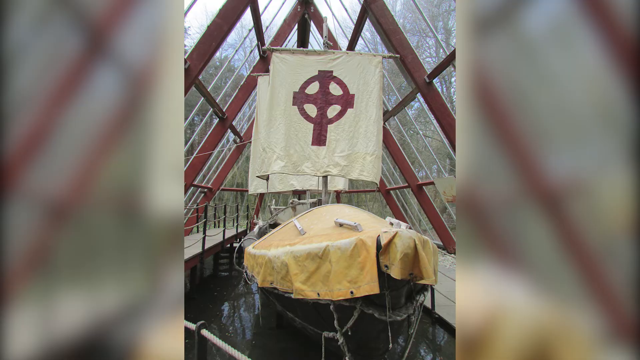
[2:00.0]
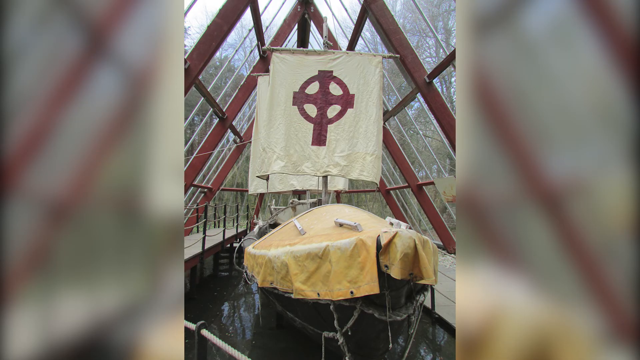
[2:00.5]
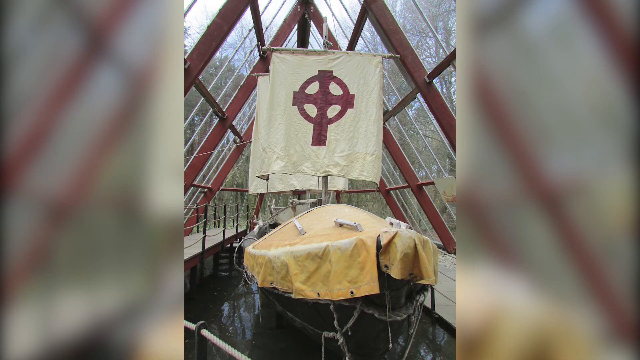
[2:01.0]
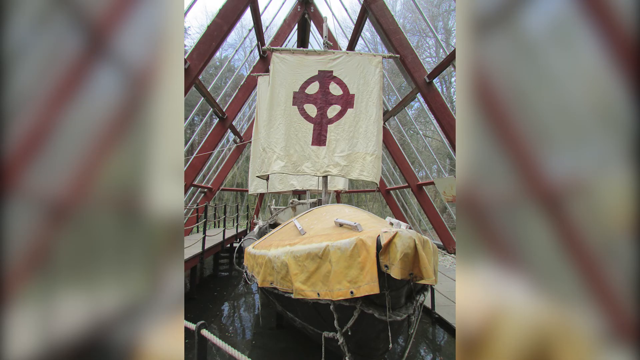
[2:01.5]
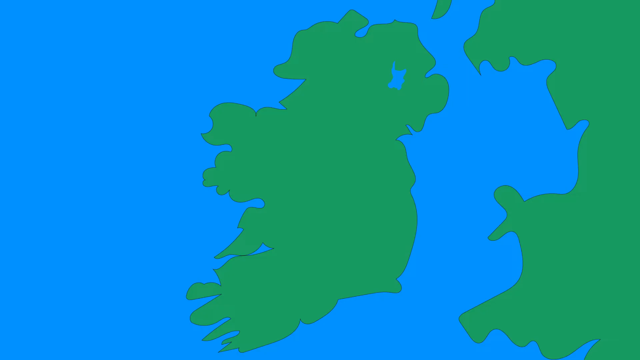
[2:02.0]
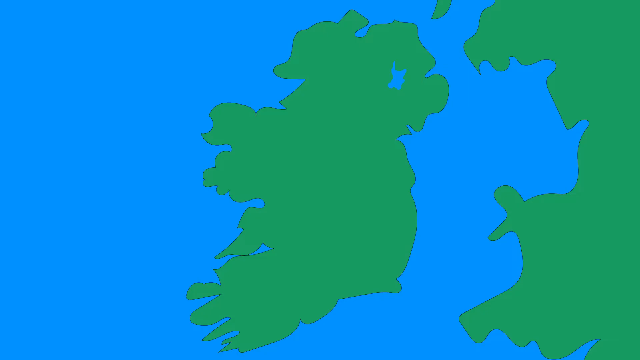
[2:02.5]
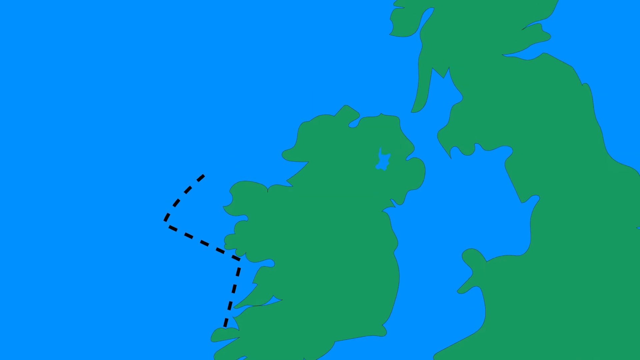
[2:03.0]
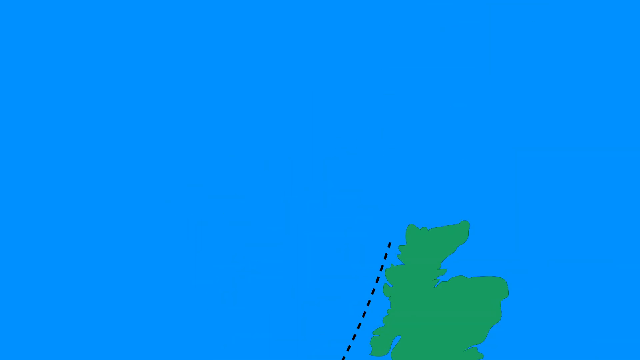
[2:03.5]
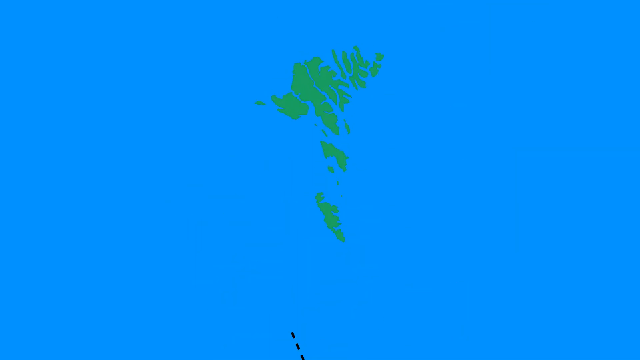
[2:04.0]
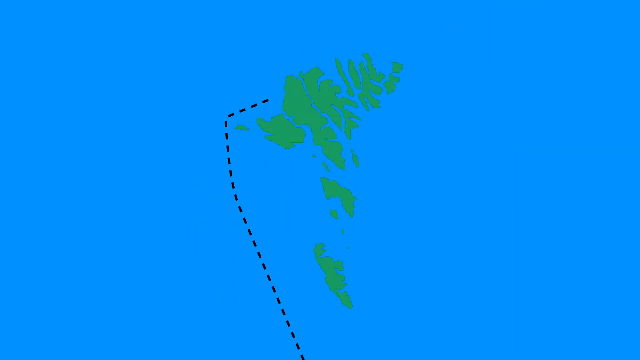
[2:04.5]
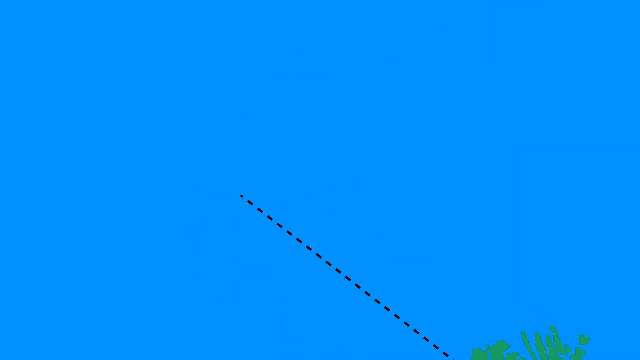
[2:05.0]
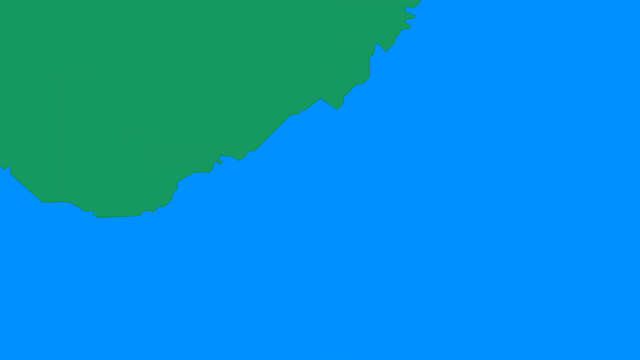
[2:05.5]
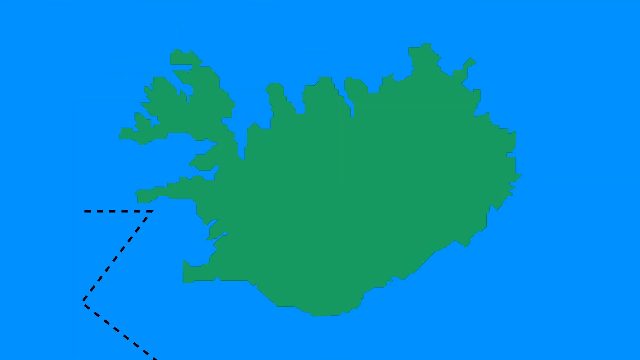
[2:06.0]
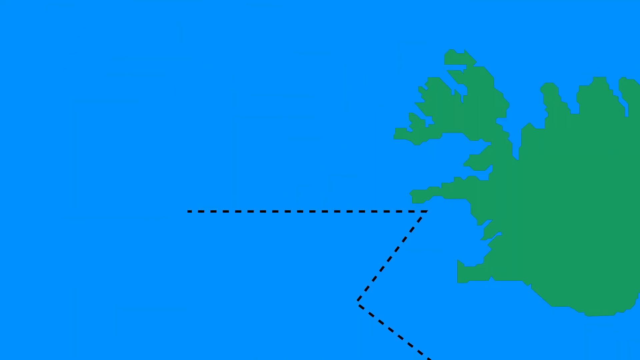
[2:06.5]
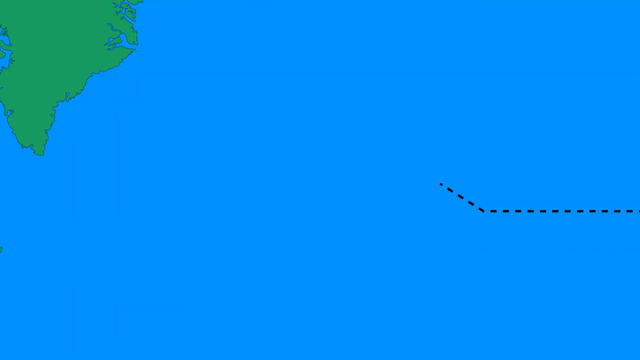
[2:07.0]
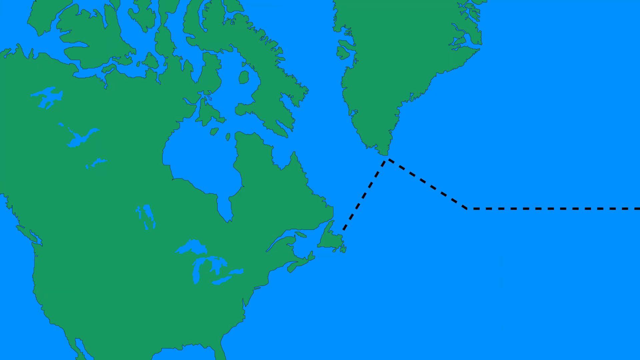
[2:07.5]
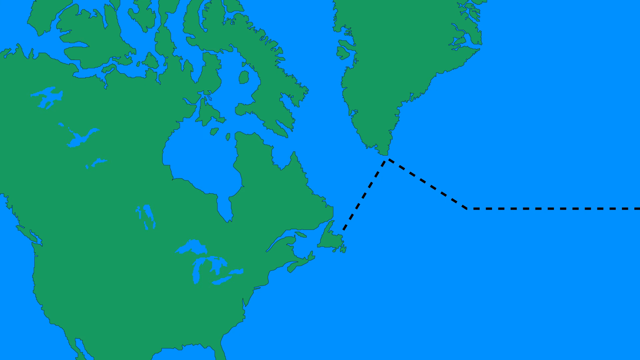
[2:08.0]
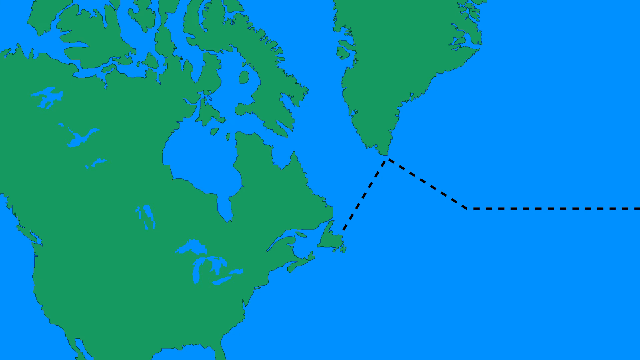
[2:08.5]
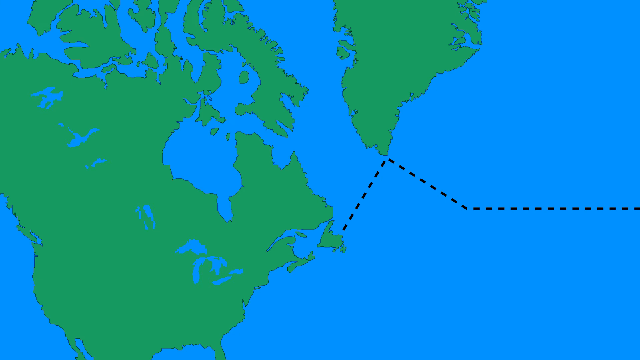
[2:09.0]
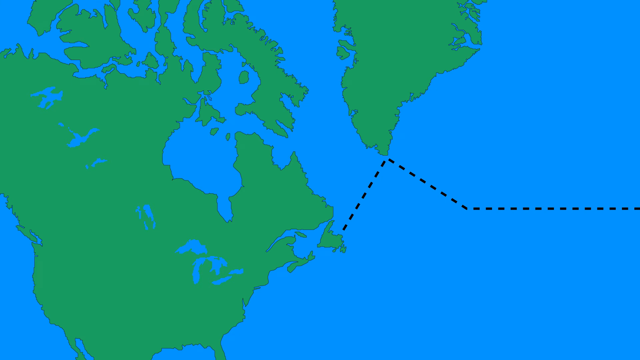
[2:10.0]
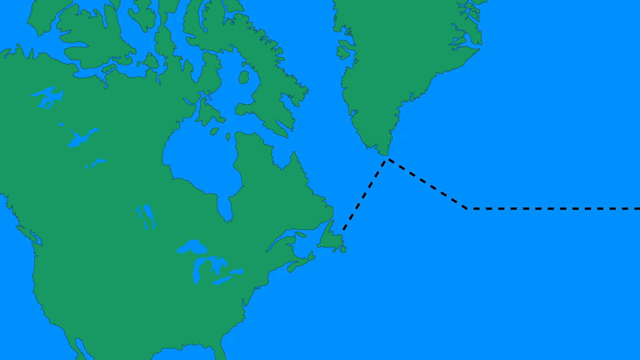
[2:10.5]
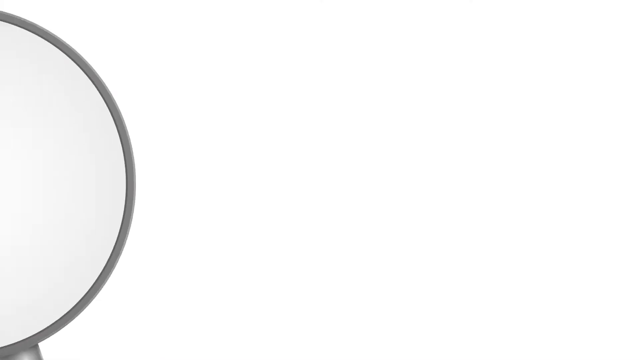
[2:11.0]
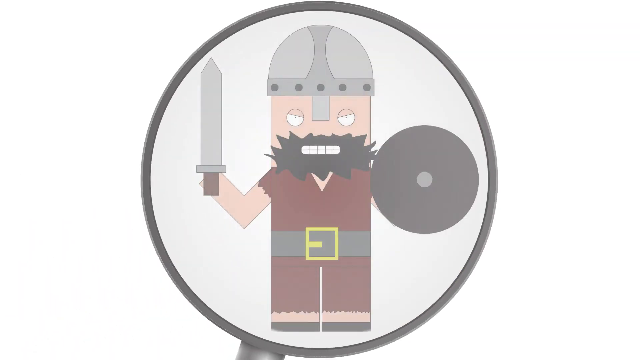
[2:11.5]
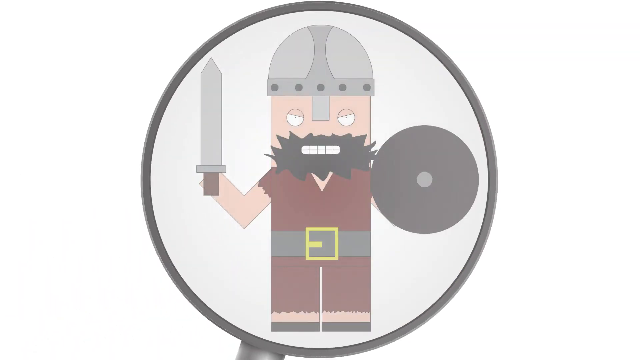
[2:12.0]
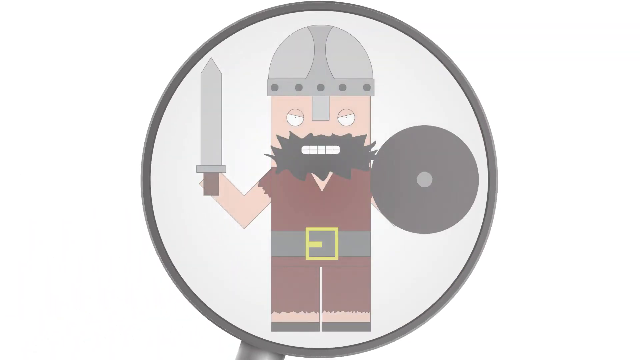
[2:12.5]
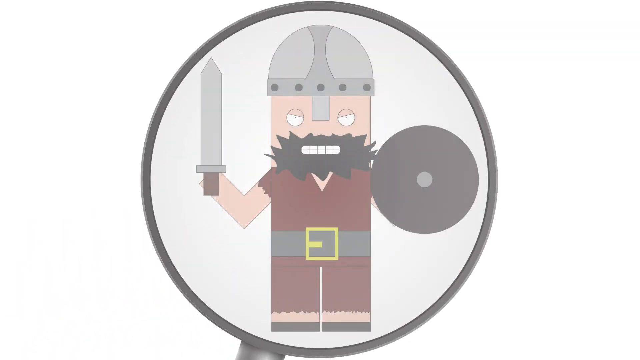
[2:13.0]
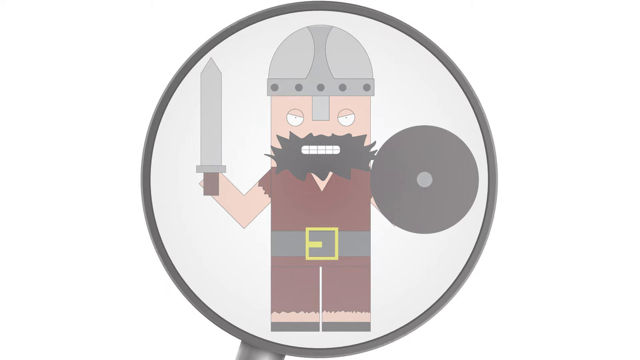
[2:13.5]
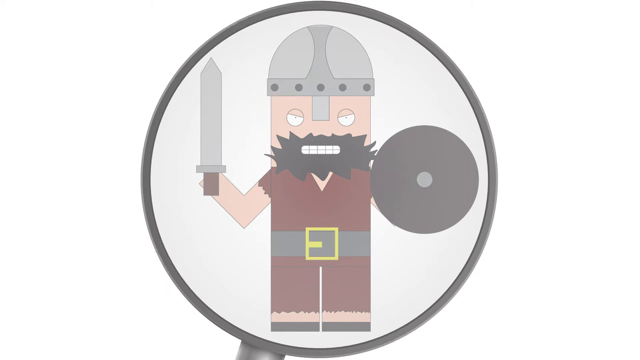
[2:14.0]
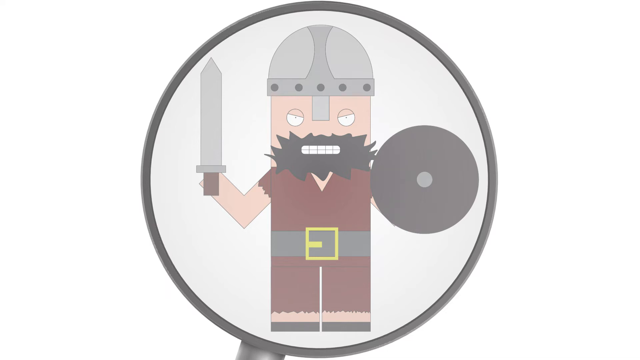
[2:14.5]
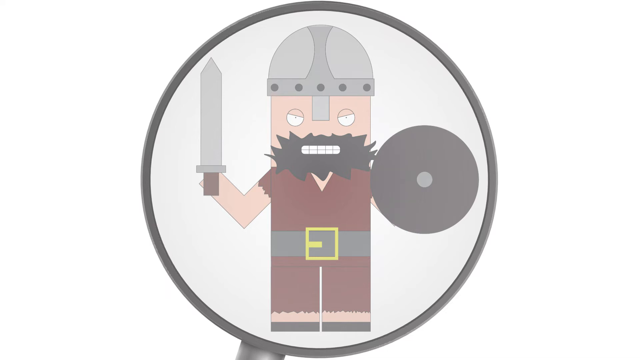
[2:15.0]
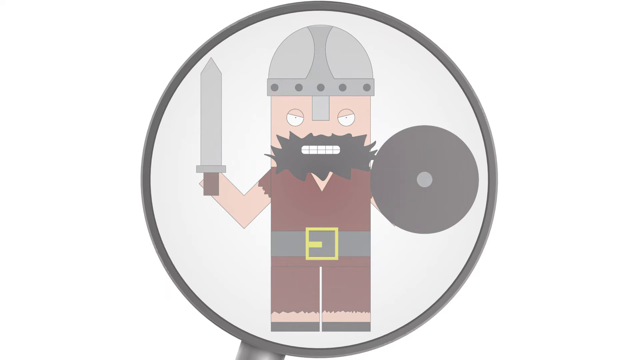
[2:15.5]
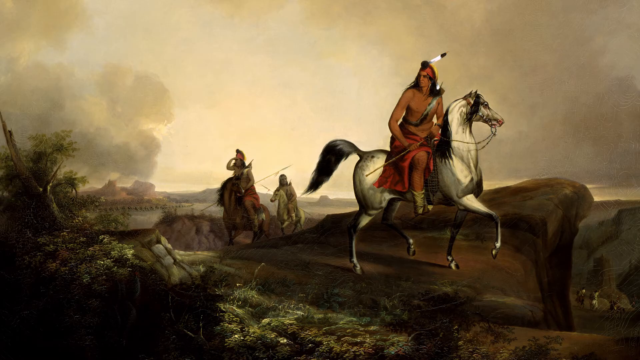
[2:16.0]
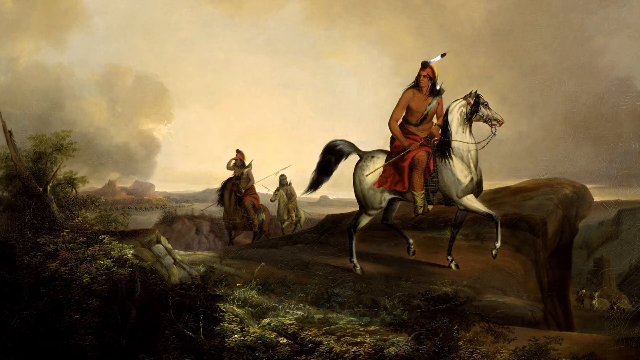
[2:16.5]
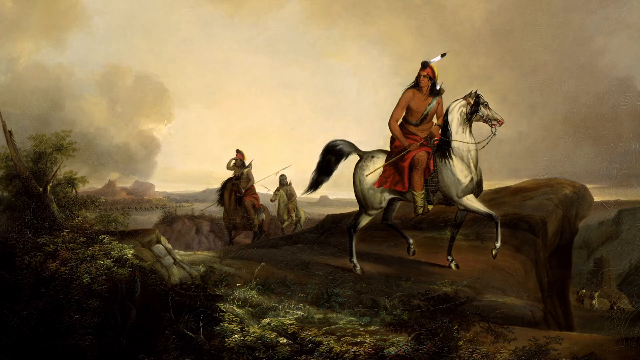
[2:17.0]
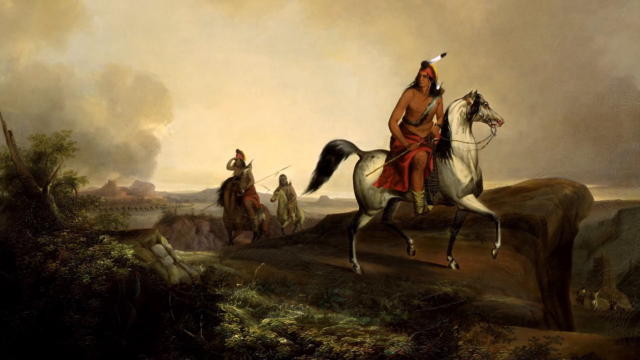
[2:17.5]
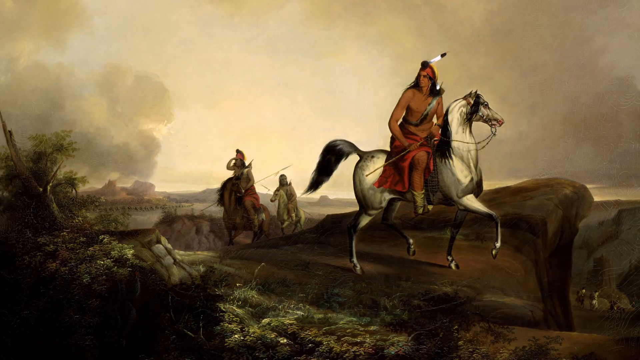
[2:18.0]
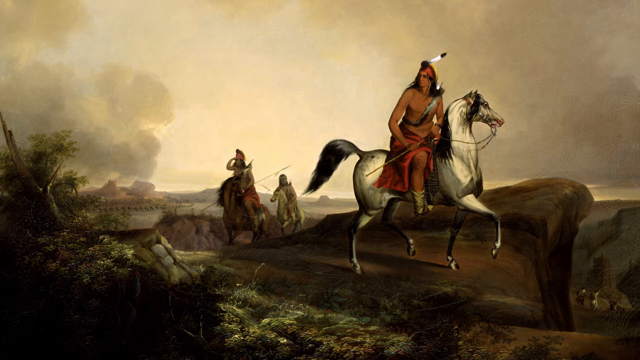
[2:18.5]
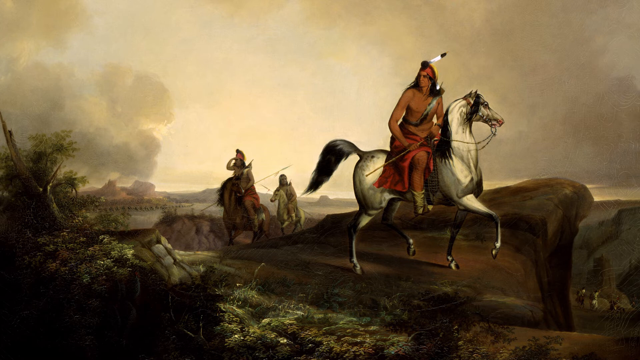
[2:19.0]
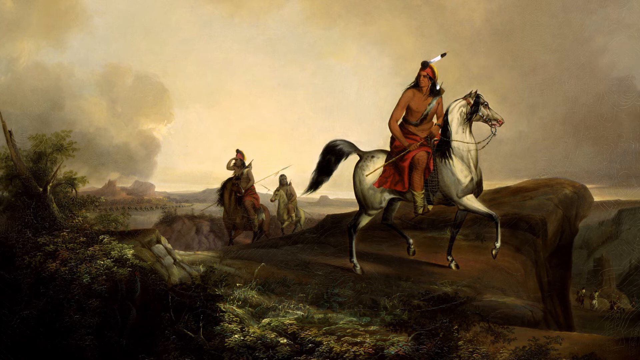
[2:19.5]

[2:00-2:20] An ancient sailboat is preserved inside a glass house, somewhat like a greenhouse, with old Crusades-era crosses painted on its sails. Next, a map shows several islands, apparently ones the early explorers encountered on their travels; the route appears to go through Iceland, then over to Greenland, and then down to the Americas, landing on the East Coast. A cartoon depiction of a Viking follows. He holds a sword in his right hand and a shield in his left, and has a large beard and mustache, a helmet, a belt and red clothes. After that comes the painting of Indians traveling through the Americas: an Indian in the lead rides a white horse and has one feather in his headdress, and two other Indians ride horses behind him, seen as silhouettes.